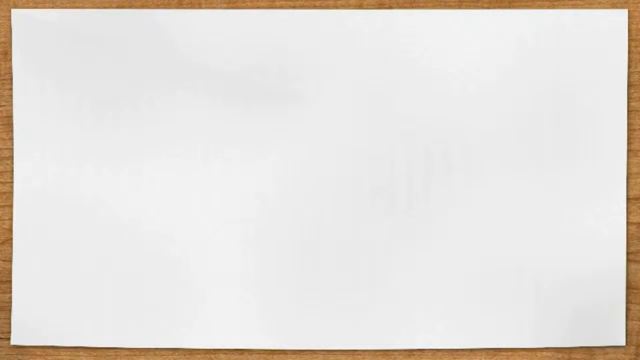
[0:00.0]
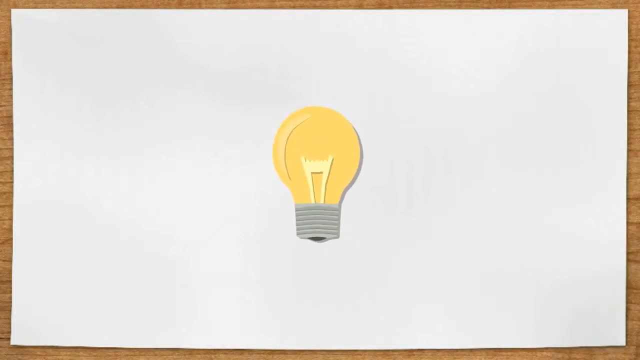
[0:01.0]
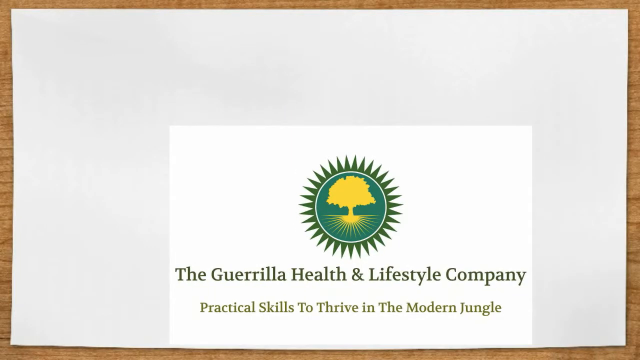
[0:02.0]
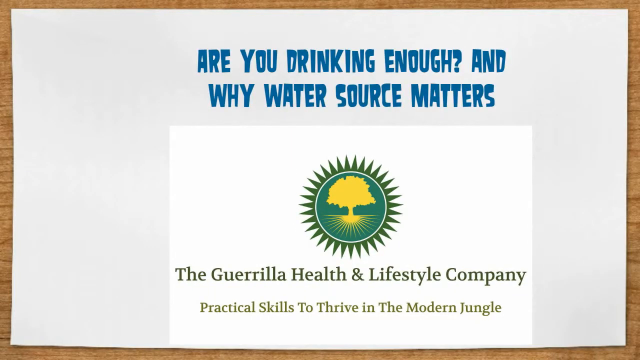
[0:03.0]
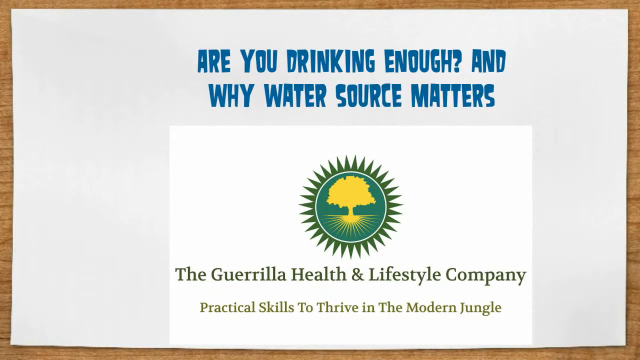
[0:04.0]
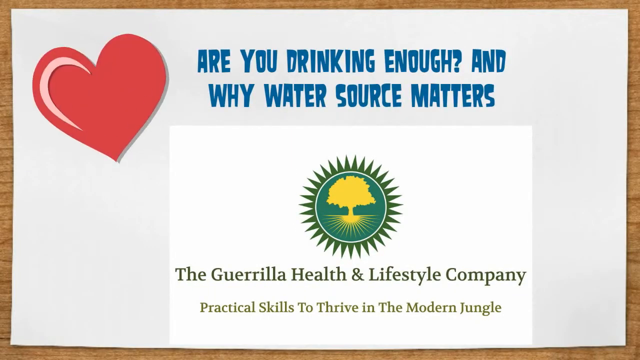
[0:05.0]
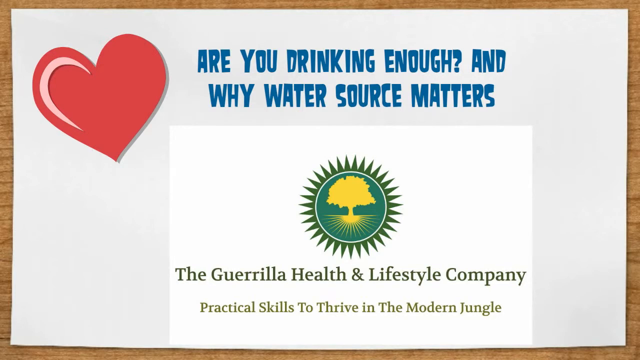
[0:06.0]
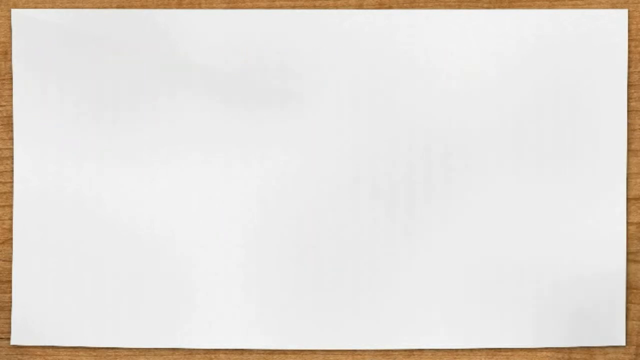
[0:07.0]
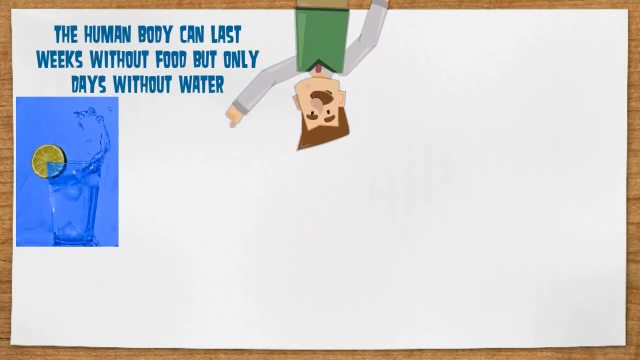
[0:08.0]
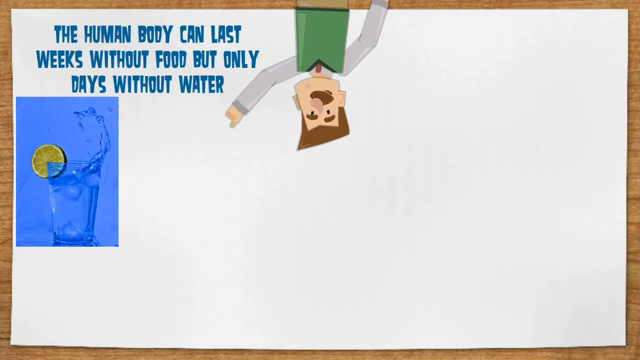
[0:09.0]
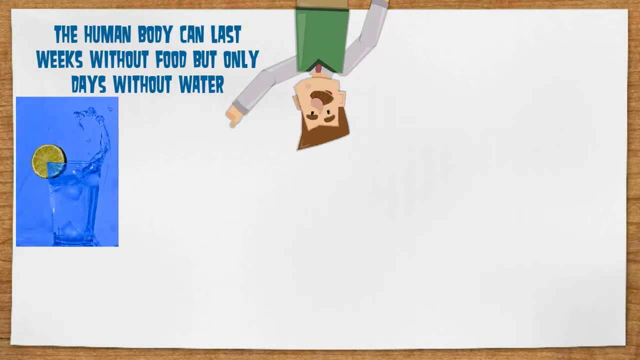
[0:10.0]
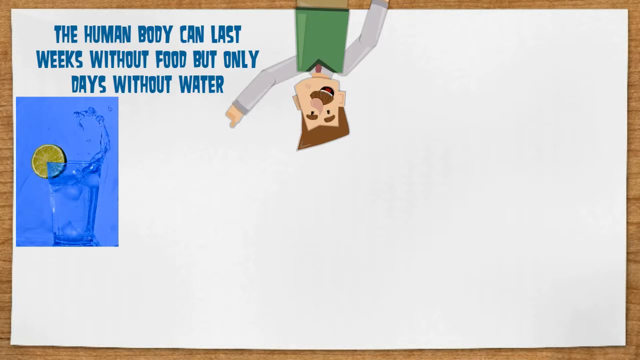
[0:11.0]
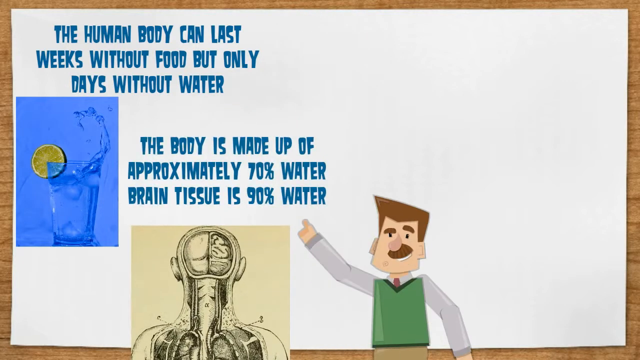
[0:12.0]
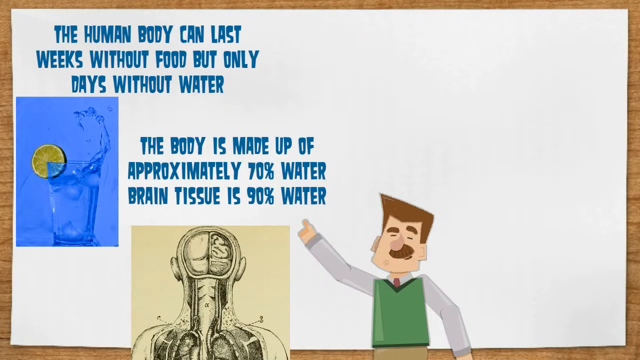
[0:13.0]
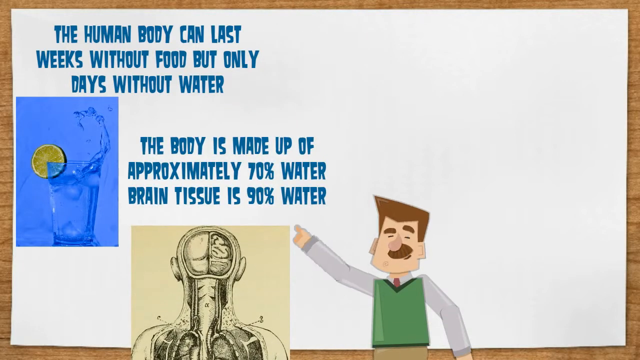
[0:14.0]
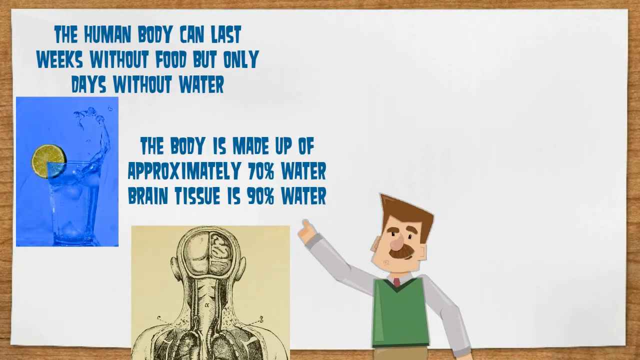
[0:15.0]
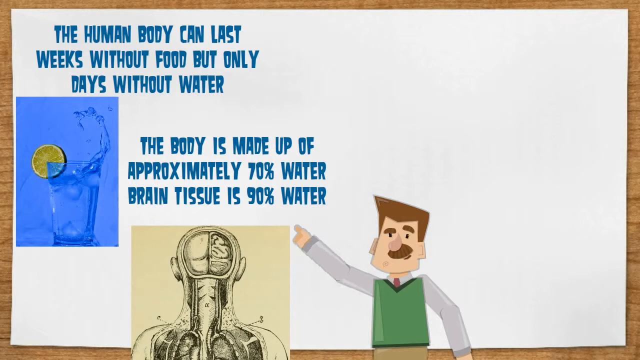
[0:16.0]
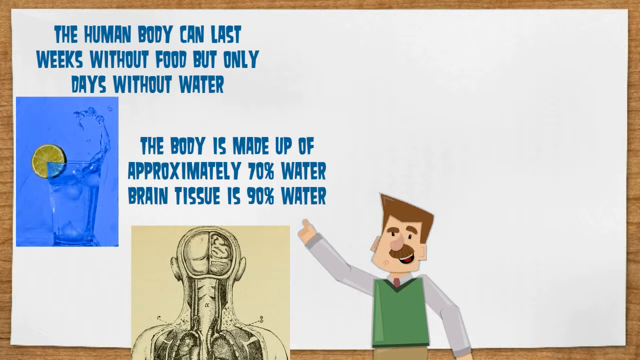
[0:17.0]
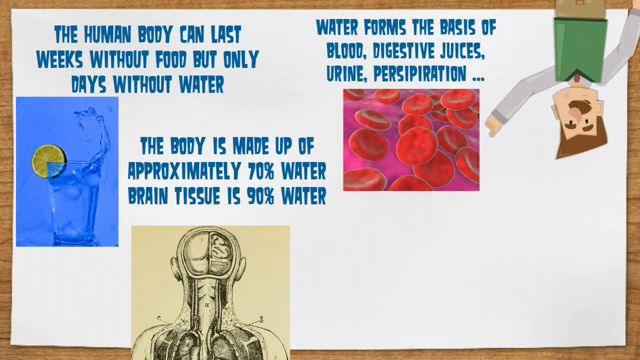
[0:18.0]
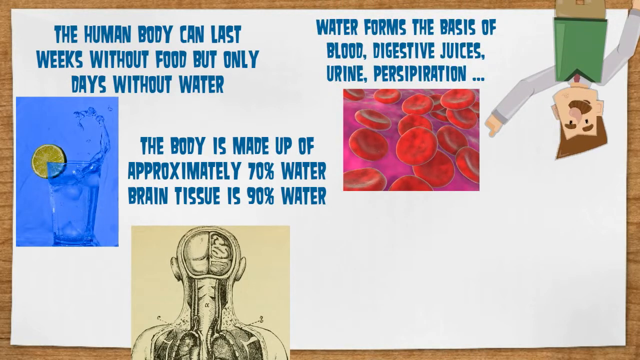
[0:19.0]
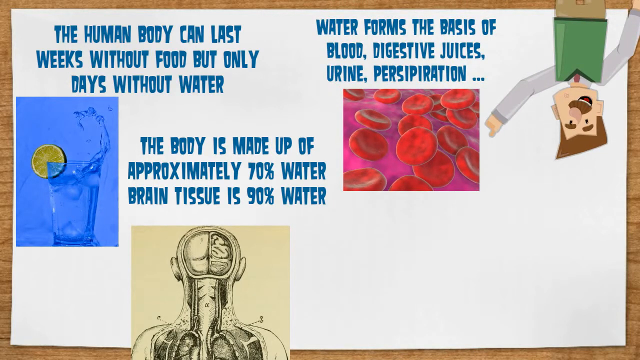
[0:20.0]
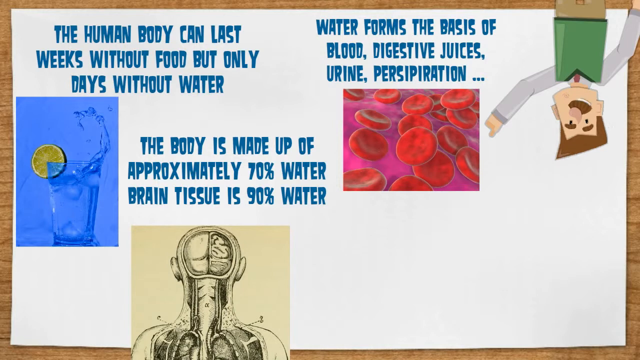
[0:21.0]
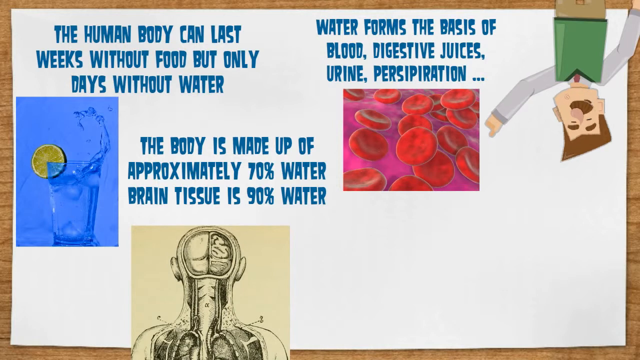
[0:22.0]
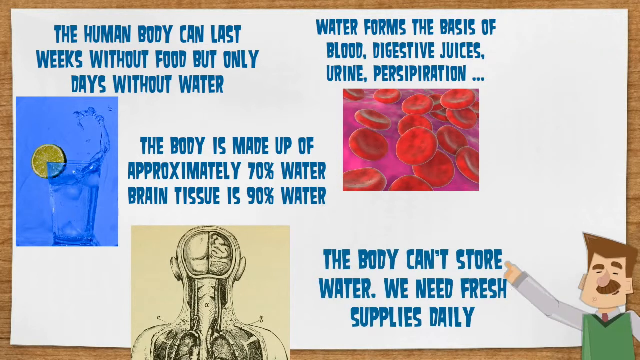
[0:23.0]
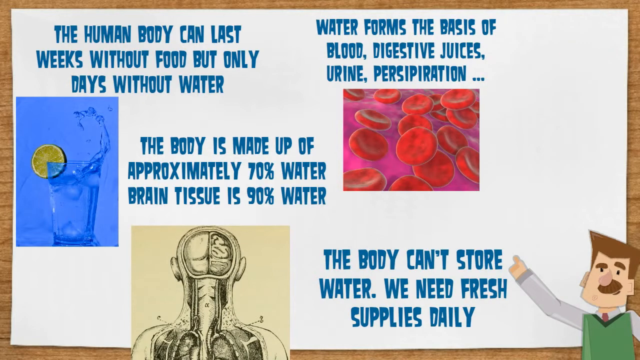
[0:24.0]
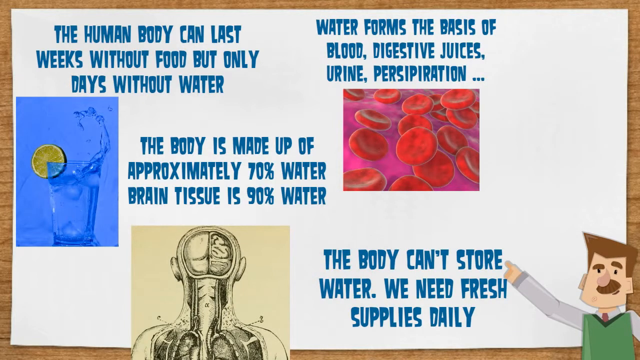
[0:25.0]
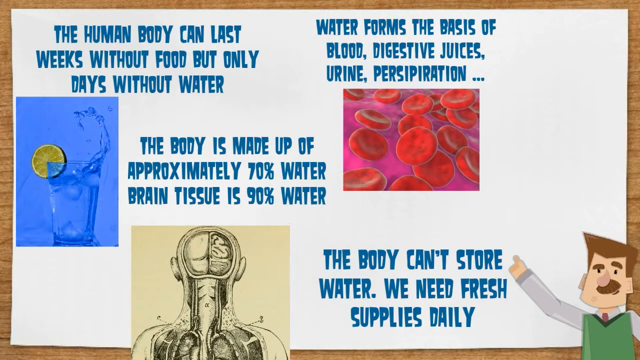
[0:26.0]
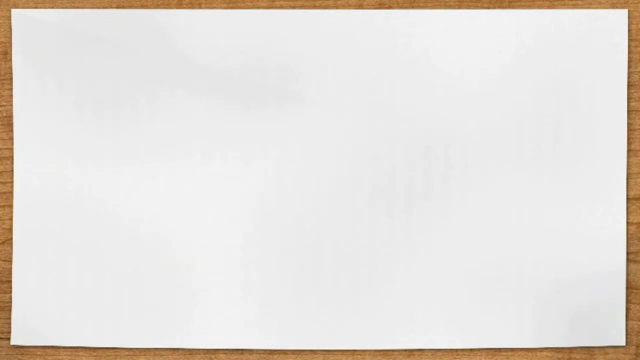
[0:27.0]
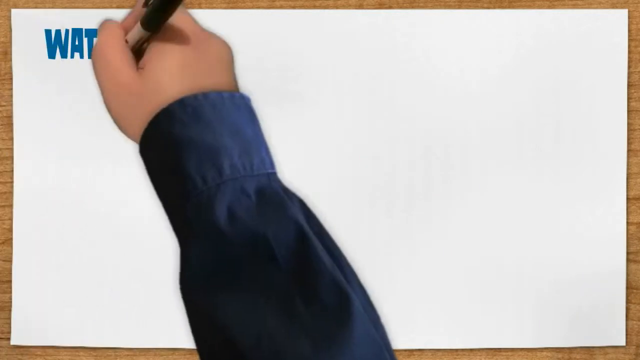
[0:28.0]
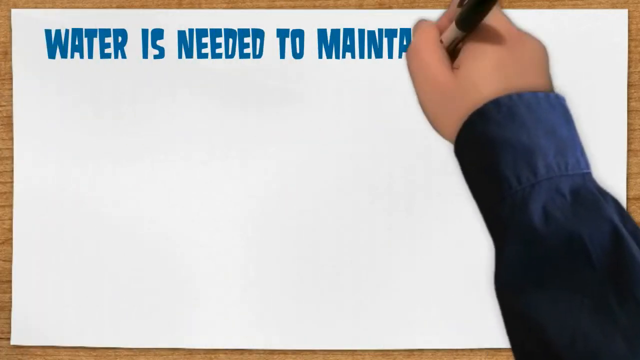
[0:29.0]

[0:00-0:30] The video opens on a wooden background with a large sheet of paper in the middle of the screen. An animated light bulb appears in the center, bounces, and is removed. An image for the Gorilla Health and Lifestyle Company and its logo appear at the bottom of the paper, with blue text above reading "are you drinking enough and why water source matters." A heart drawing appears on the left side of the paper. These all disappear and are replaced by an image of a glass of water on the left side of the paper, with text above it reading "the human body can last weeks without food but only days without water." A cartoon of an upside-down man appears; he has brown hair, a brown mustache, a white shirt, a red tie, a green sweater vest on top and brown trousers. He points with his right hand to the water fact in the top left corner, and he is speaking, his arm waving up and down. A drawing of a brain in a head then appears, with text above it reading "the body is made up of approximately 70% water, brain tissue is 90% water." The man appears from the bottom of the screen again, this time the right way up; he points to the fact with his right hand while his head moves side to side and his mouth moves as if he is speaking. He disappears, falling to the bottom of the image, and an image of red blood cells appears on the right side of the paper, with blue text above it reading "water forms the basis of blood, digestive juices, urine, perspiration." The man appears to the right of this fact, pointing at it with his right arm, his lips, head and arm moving. A final fact appears in the bottom right corner reading "the body can't store water, we need fresh supplies daily." The man pops up from the bottom right corner, only his shoulders, head and arm visible, his head, hand and mouth moving in the same way. The images all become a little bigger before disappearing completely. A right hand in a long-sleeved blue shirt appears holding a sharpie and is made to move as if writing from left to right across the top of the page.